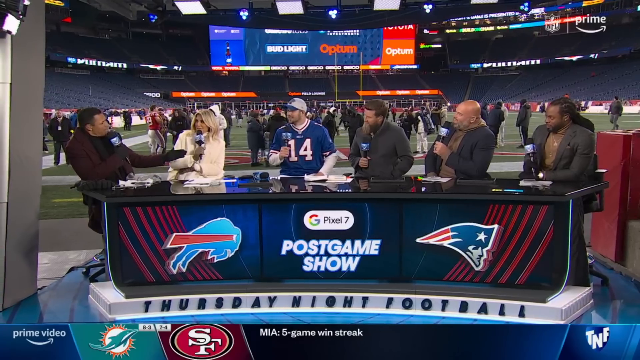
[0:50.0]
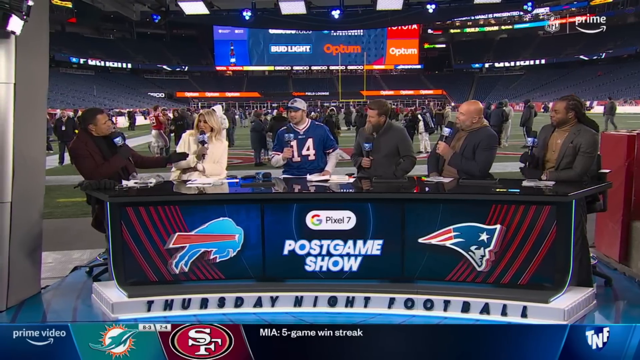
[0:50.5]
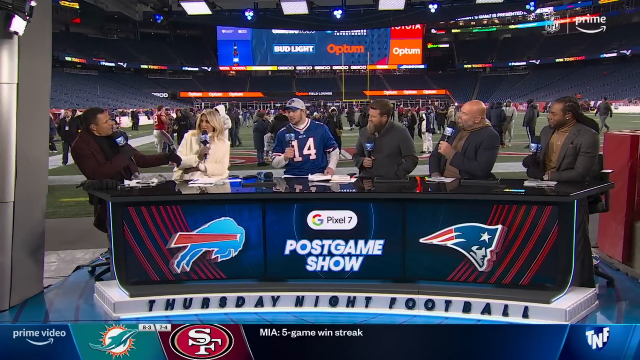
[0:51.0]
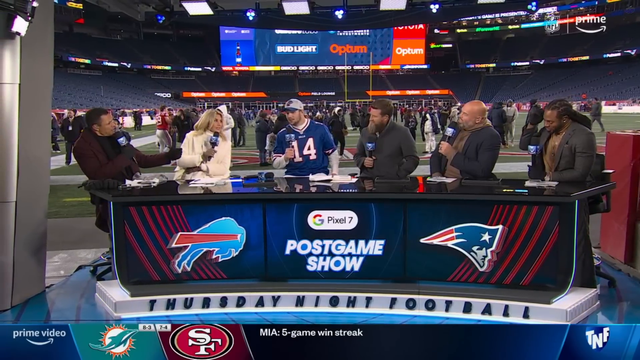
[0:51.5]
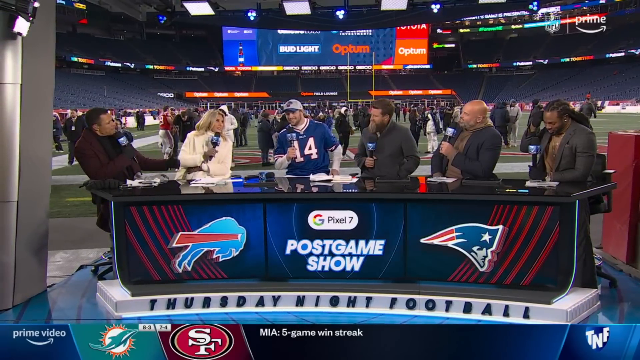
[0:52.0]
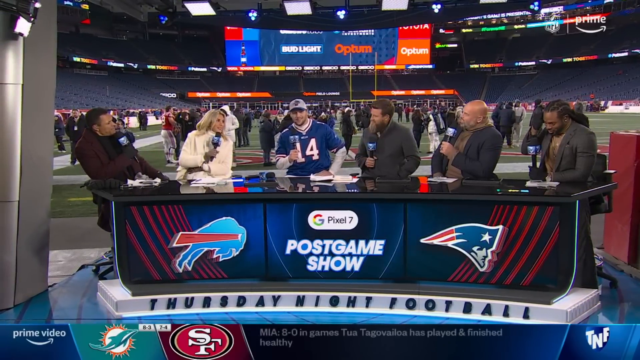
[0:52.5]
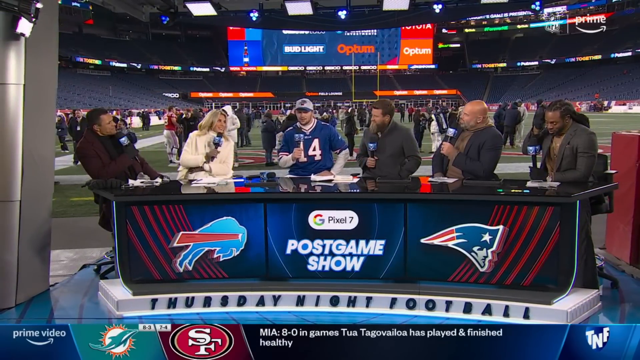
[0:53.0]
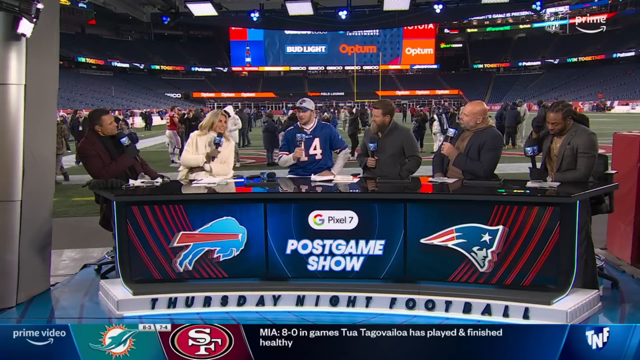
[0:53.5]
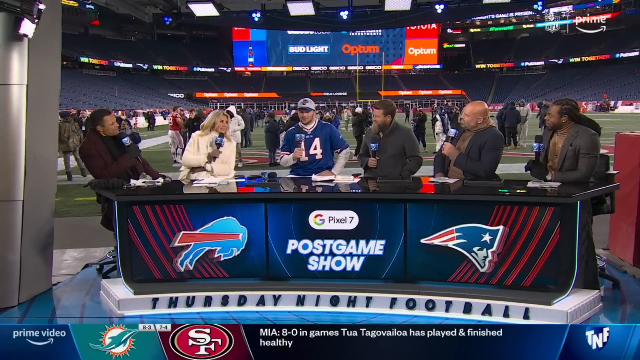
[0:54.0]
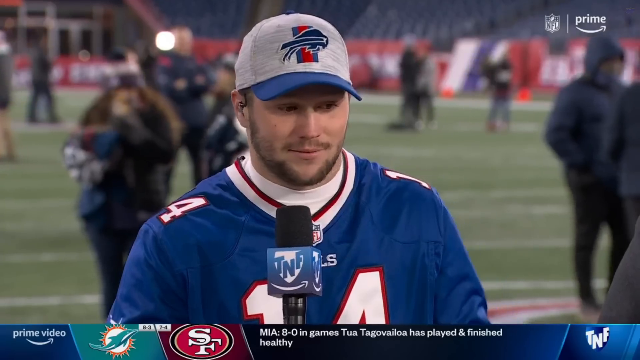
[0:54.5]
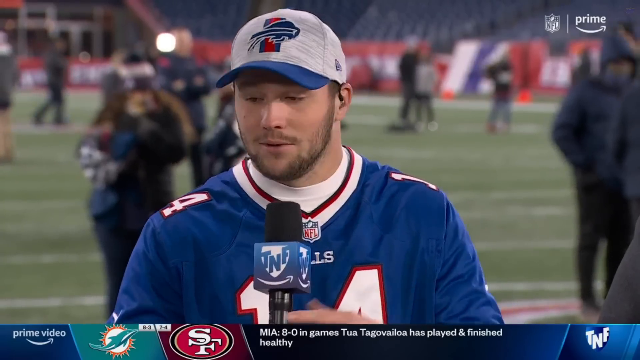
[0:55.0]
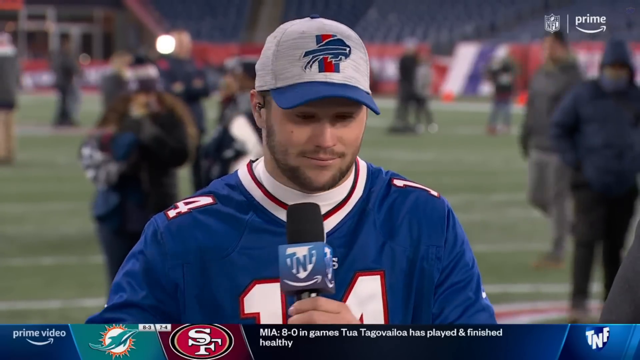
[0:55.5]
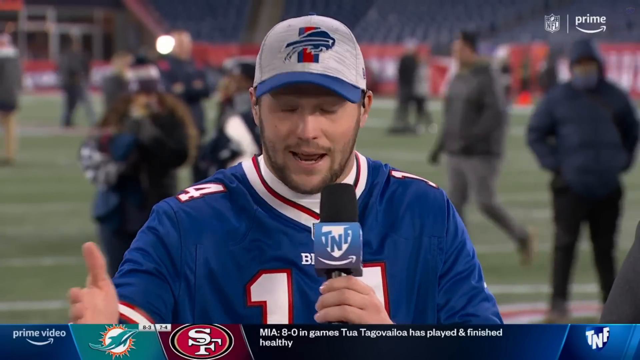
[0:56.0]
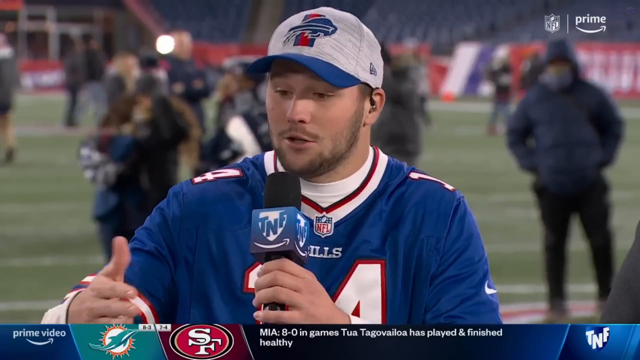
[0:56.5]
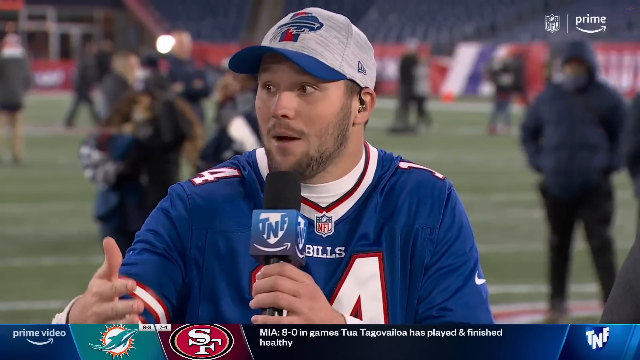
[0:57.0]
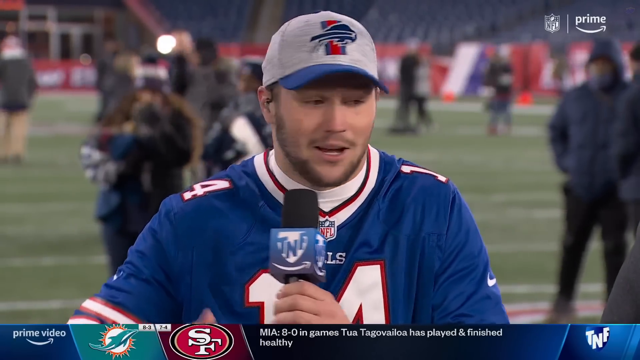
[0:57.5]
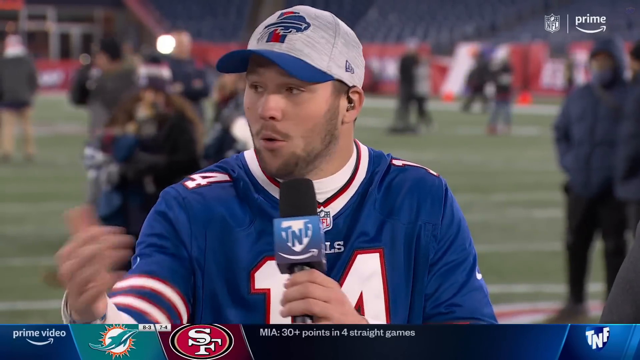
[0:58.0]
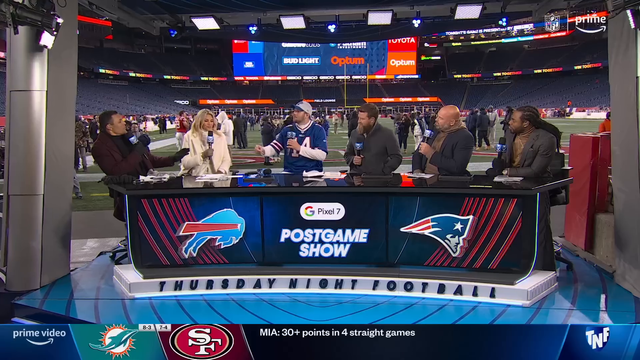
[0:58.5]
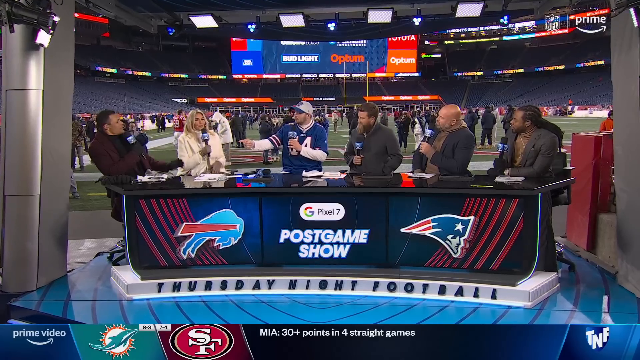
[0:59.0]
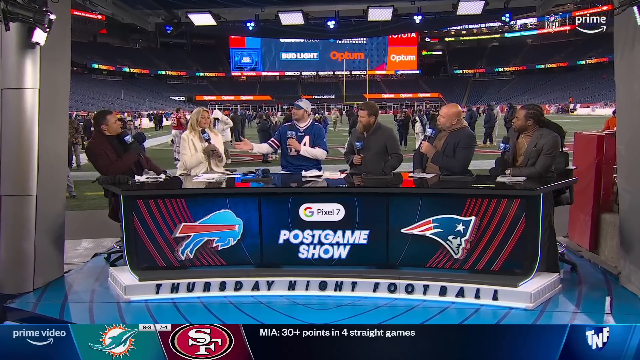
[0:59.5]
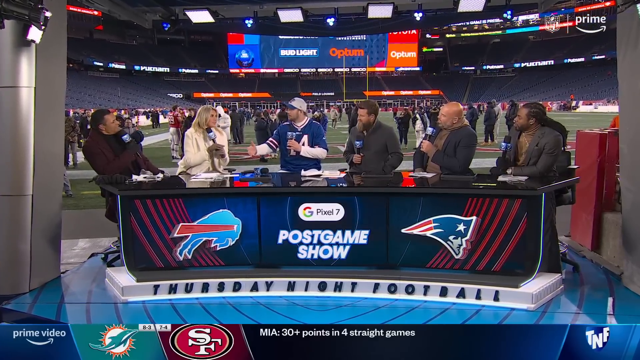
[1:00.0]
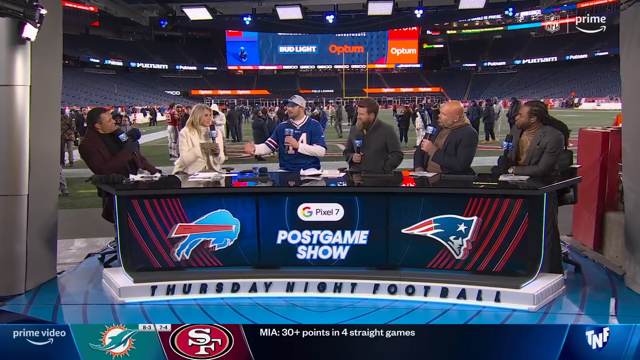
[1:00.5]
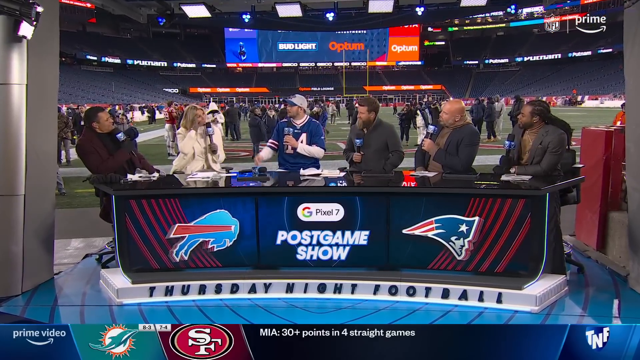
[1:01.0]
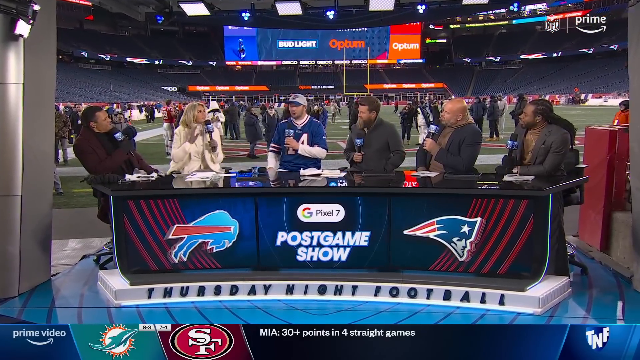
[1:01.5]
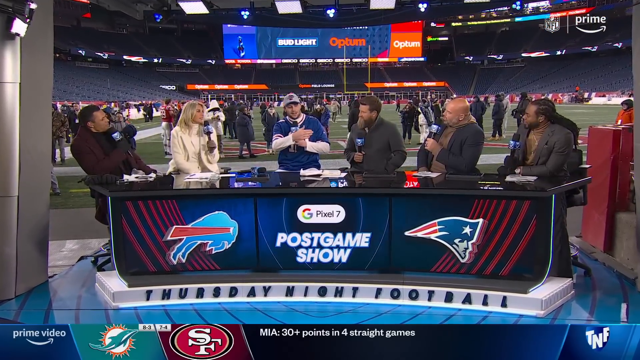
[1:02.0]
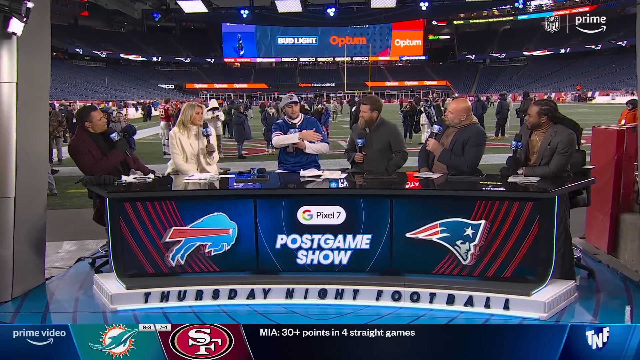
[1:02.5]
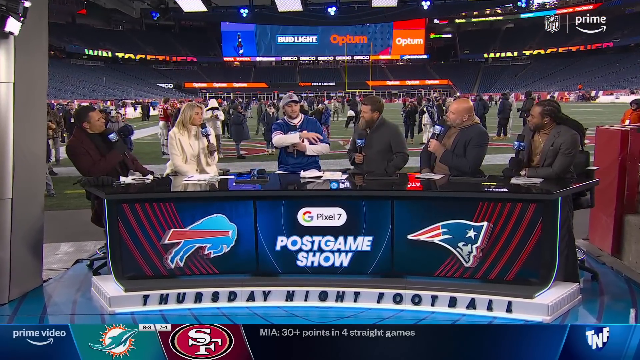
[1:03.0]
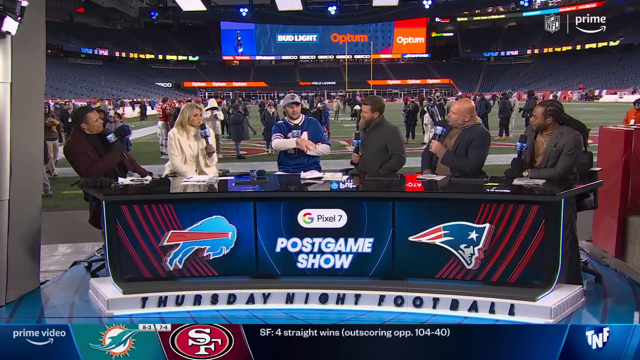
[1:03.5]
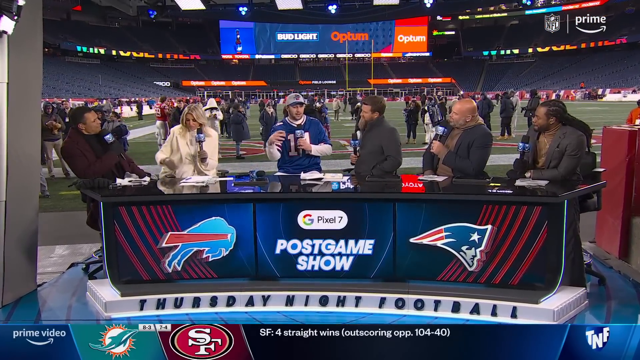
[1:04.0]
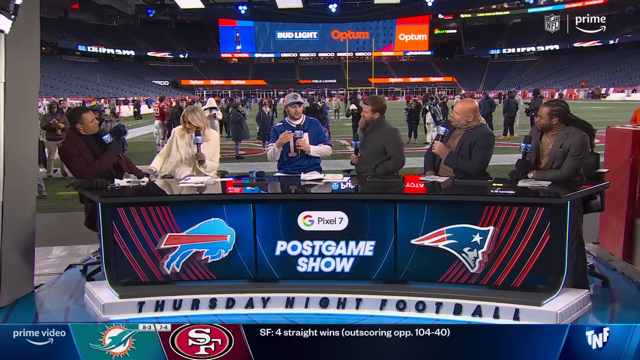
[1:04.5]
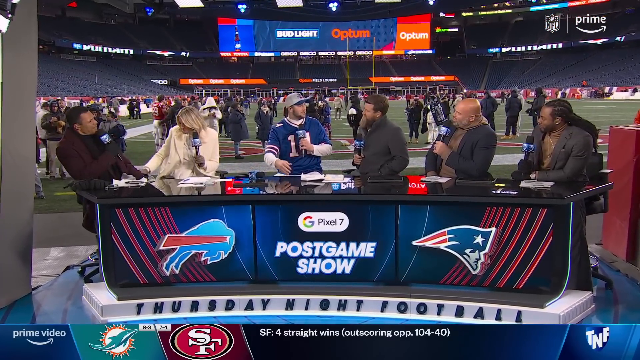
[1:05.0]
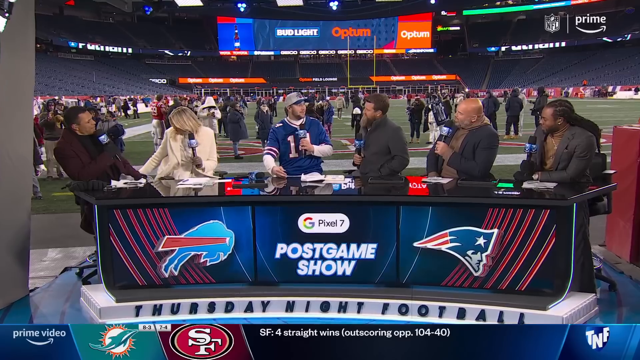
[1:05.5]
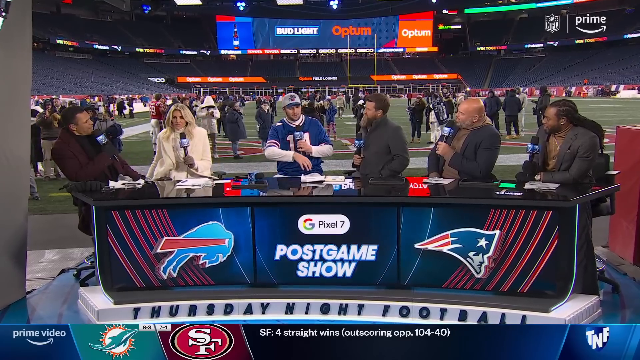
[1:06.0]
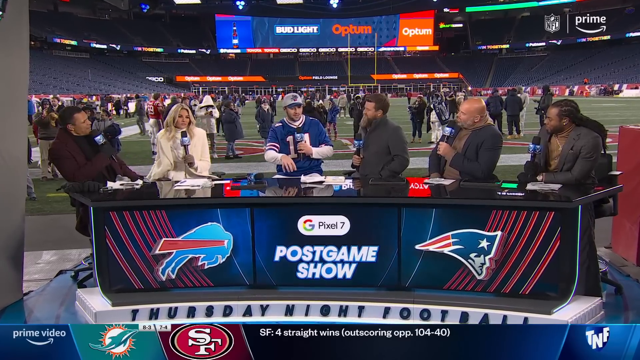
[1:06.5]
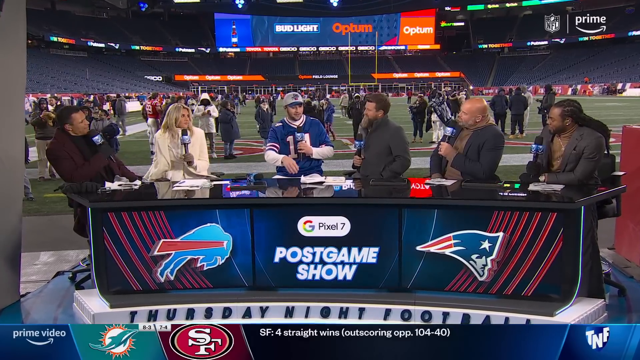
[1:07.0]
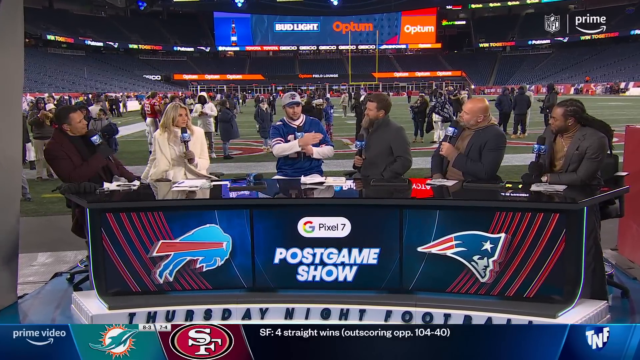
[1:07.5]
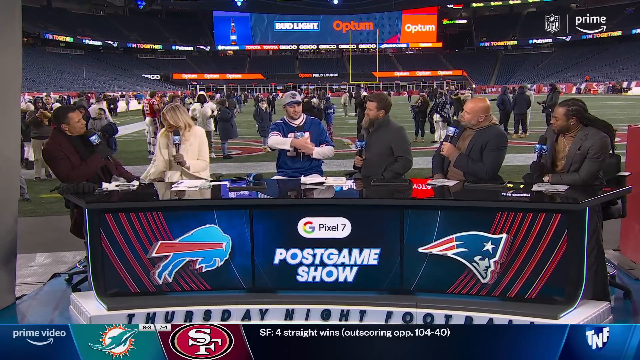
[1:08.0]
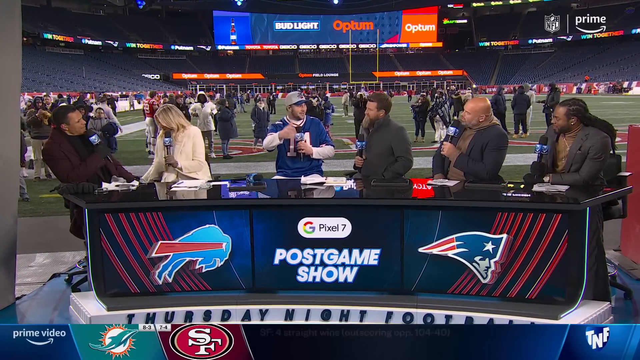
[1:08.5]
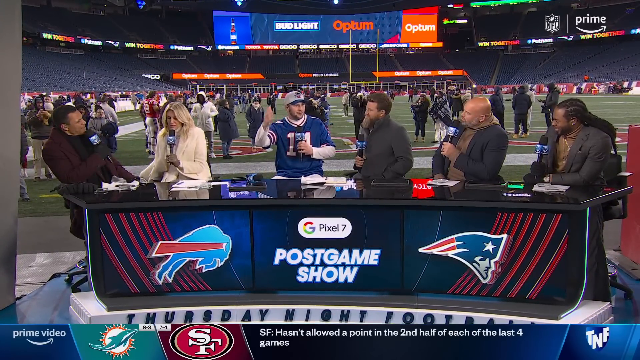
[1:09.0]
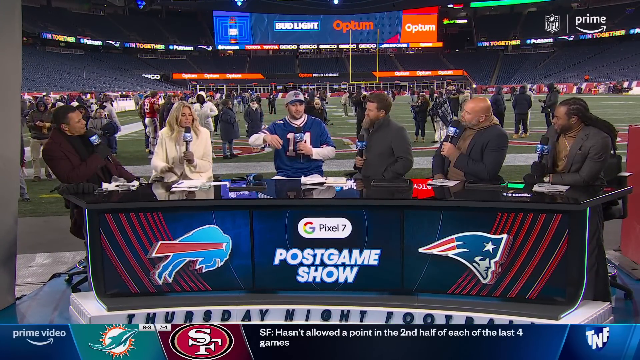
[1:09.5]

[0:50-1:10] A close-up shows the football player during the post-game interview. He wears a blue, red and white baseball cap with a white body, a blue brim, and a blue, white and red design on the front. He looks excited after a big win. He speaks with enthusiasm, looking at the interviewers and talking with his hands, tapping the desk in front of him and moving his hands all around. The interviewers look directly and intently at him.